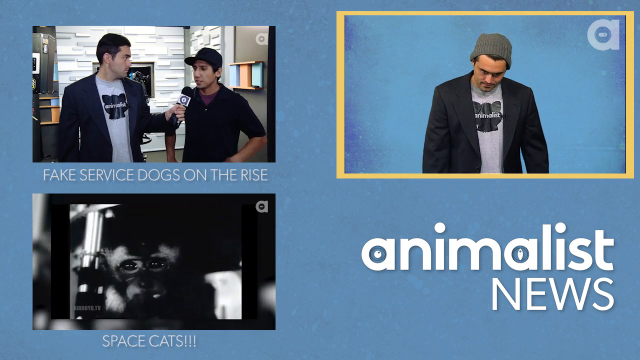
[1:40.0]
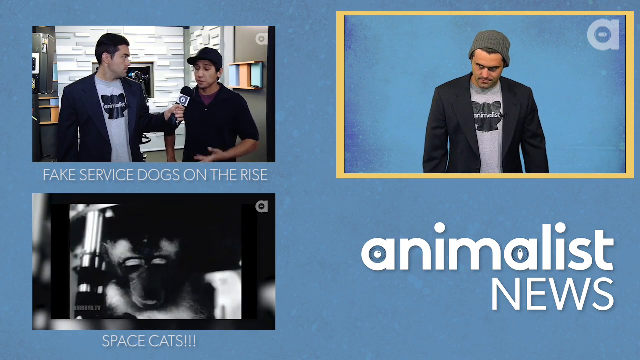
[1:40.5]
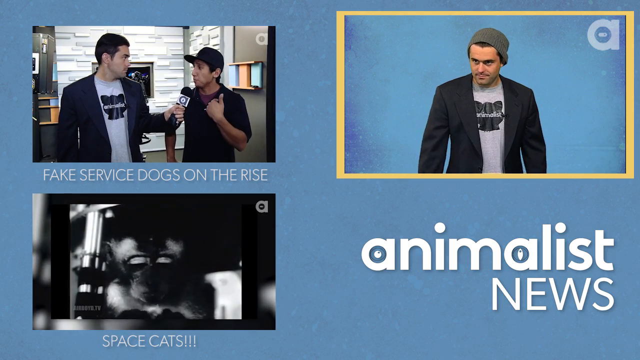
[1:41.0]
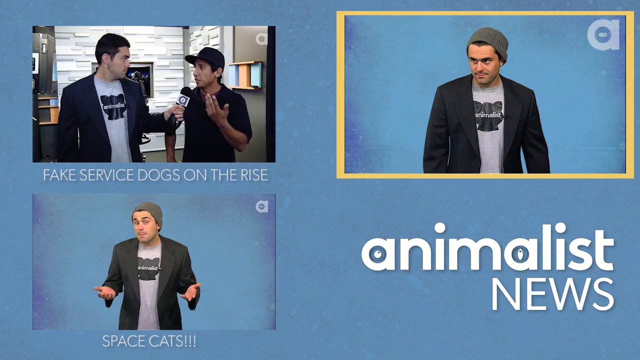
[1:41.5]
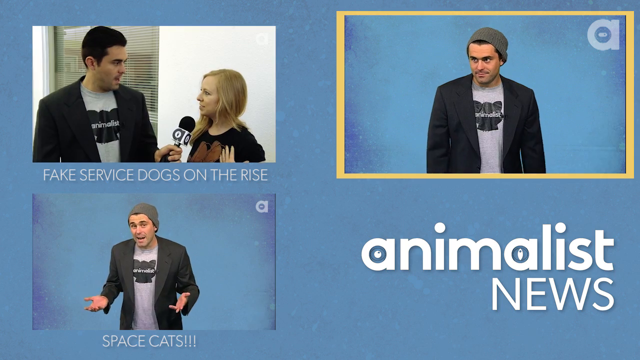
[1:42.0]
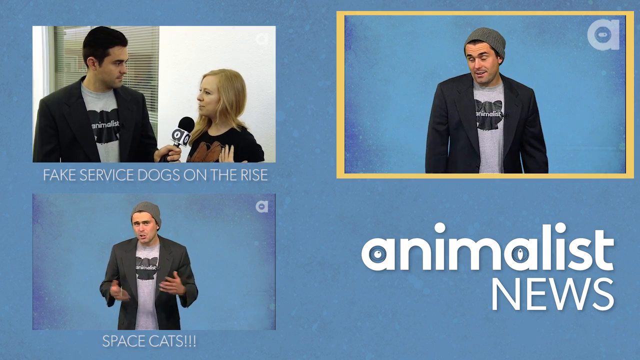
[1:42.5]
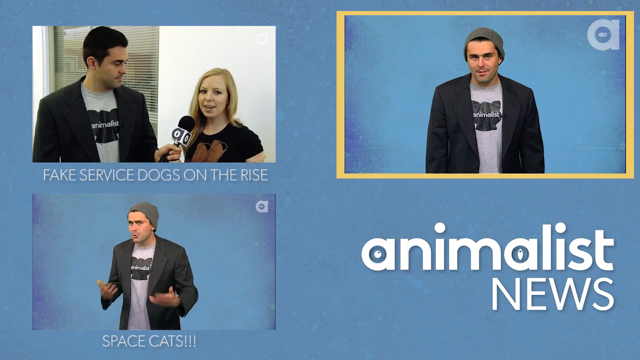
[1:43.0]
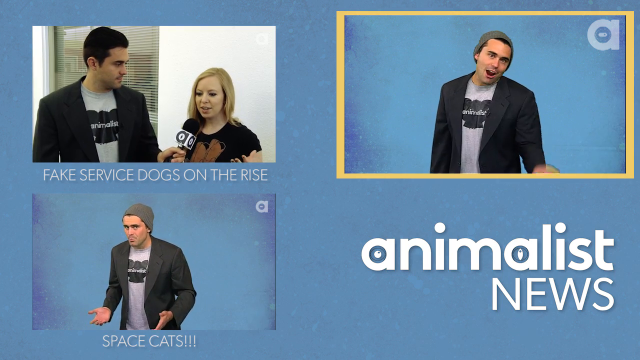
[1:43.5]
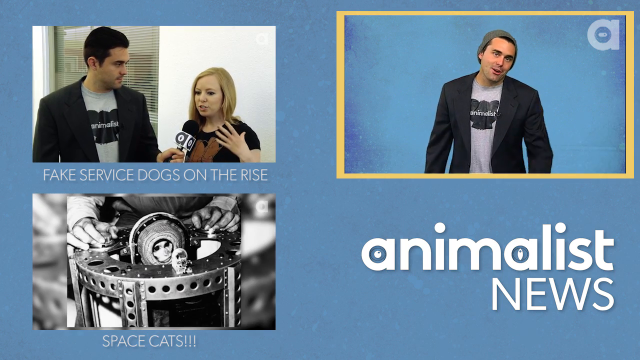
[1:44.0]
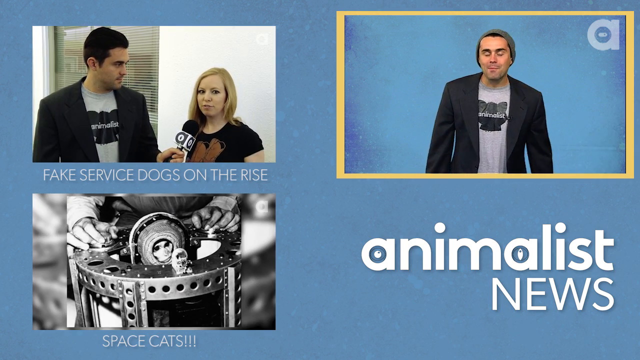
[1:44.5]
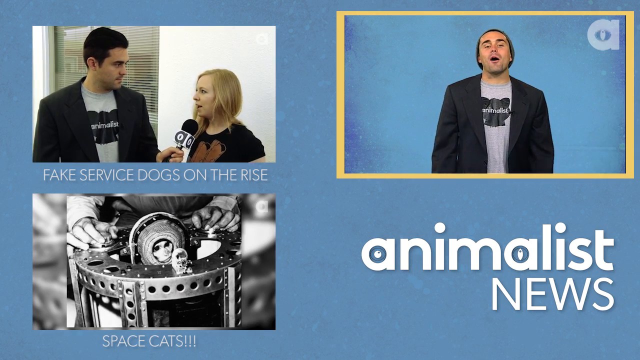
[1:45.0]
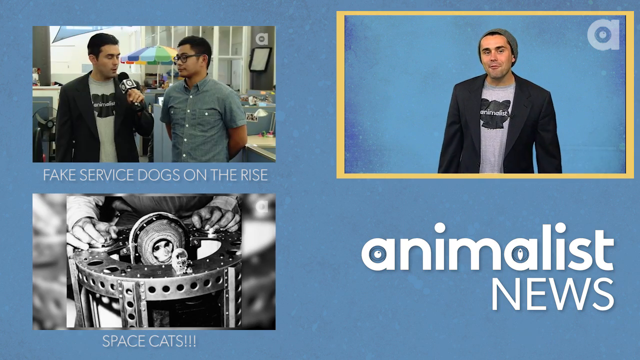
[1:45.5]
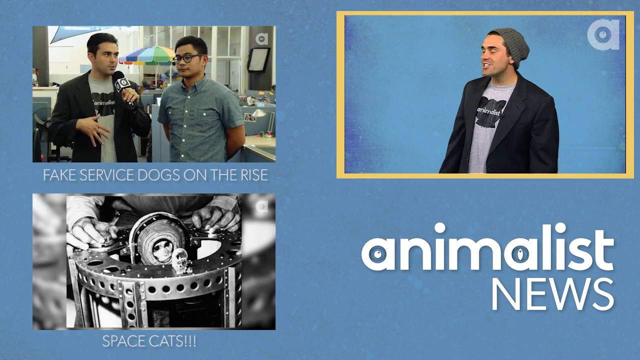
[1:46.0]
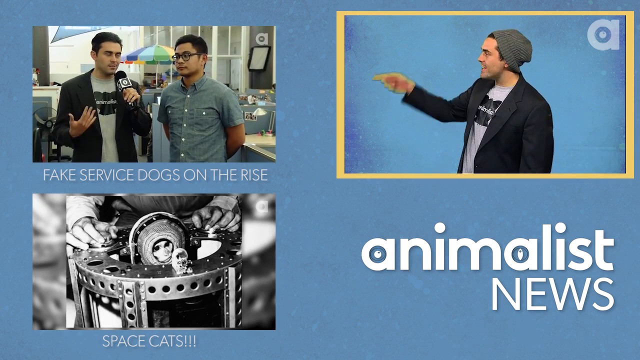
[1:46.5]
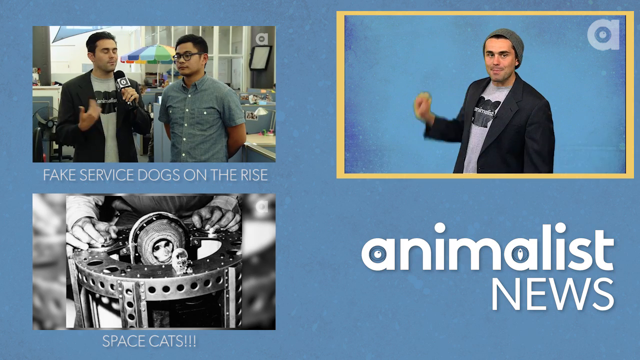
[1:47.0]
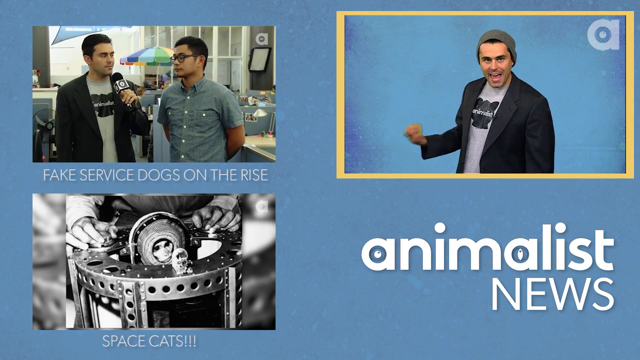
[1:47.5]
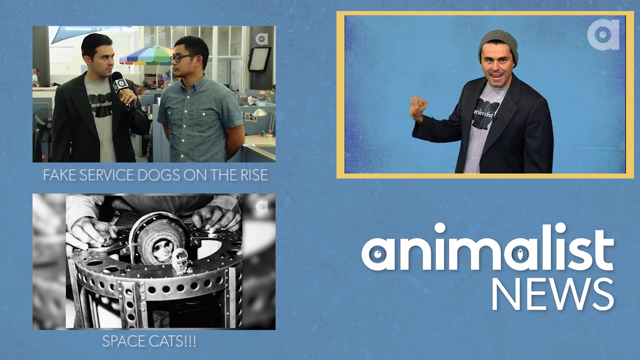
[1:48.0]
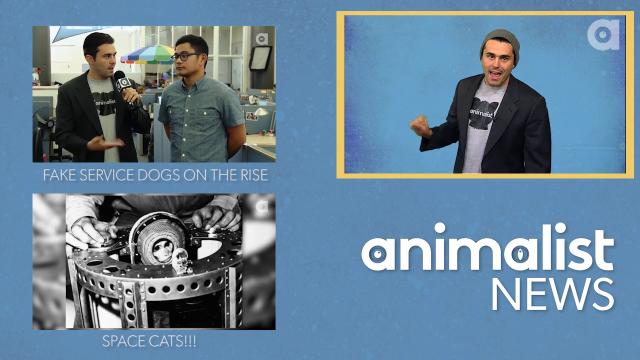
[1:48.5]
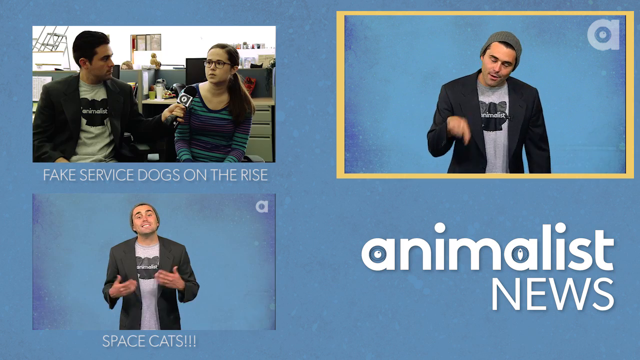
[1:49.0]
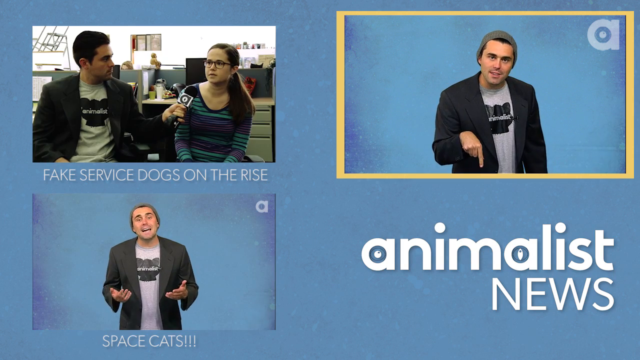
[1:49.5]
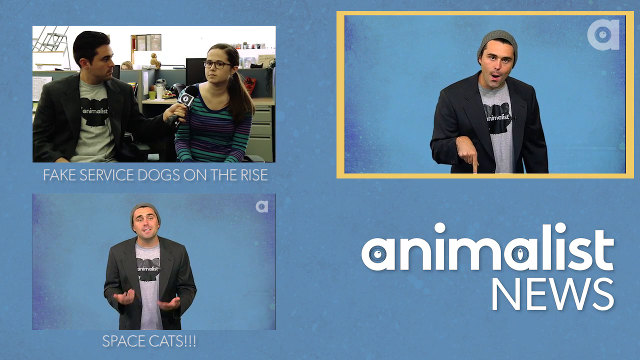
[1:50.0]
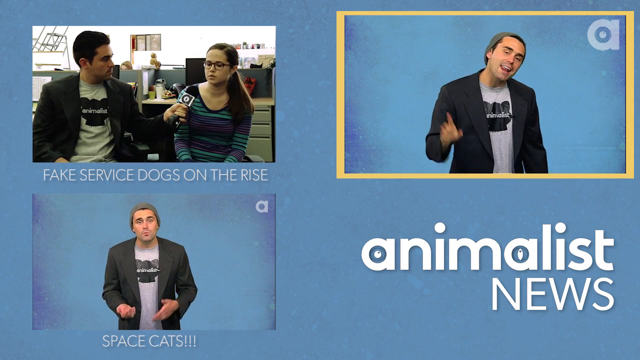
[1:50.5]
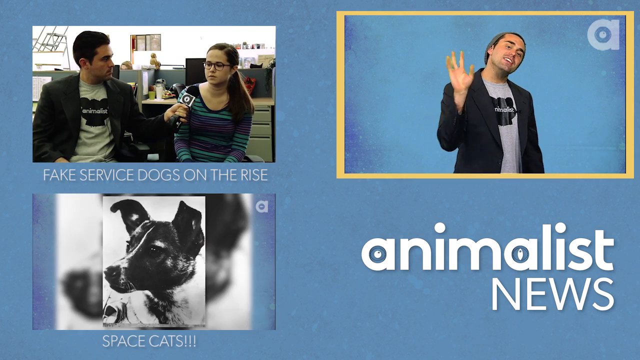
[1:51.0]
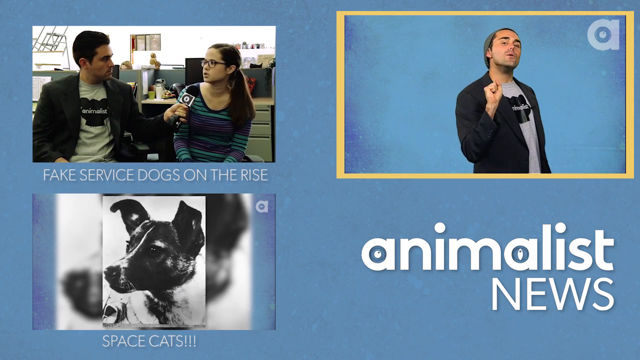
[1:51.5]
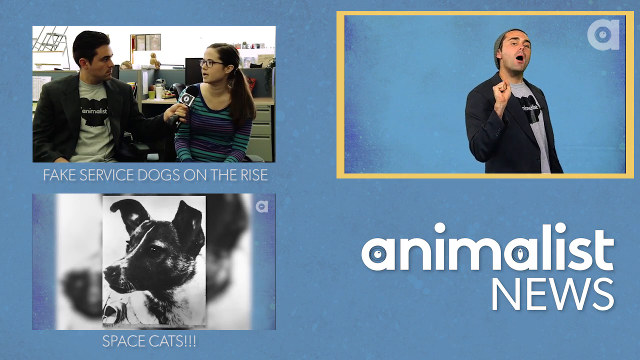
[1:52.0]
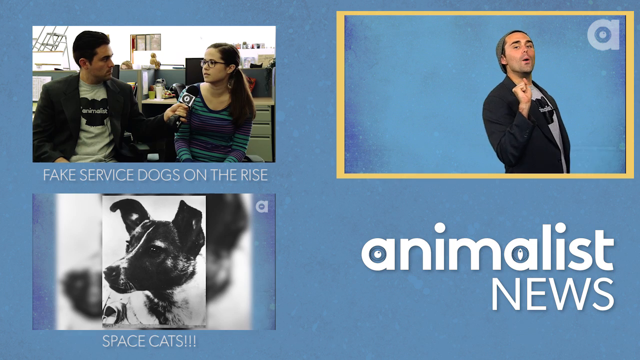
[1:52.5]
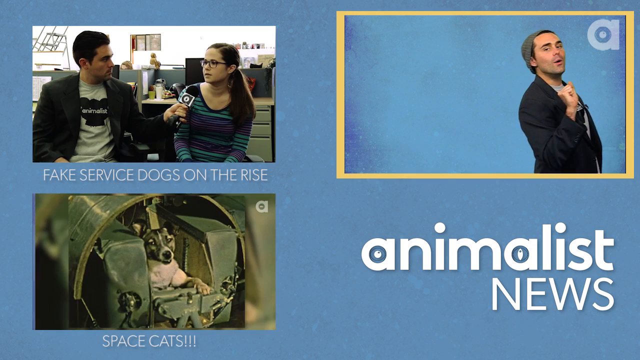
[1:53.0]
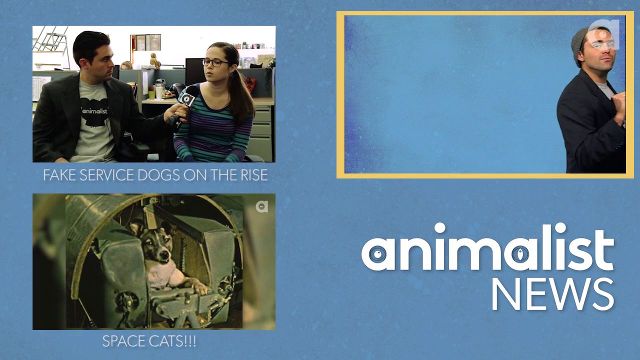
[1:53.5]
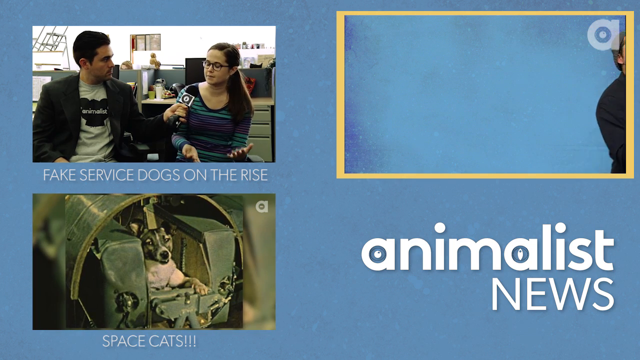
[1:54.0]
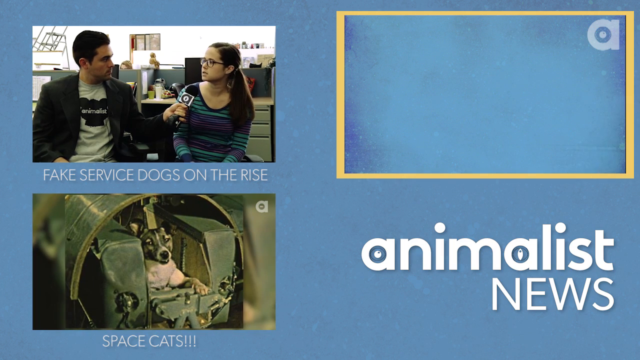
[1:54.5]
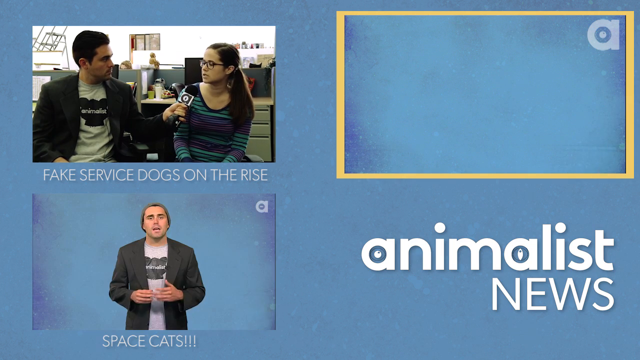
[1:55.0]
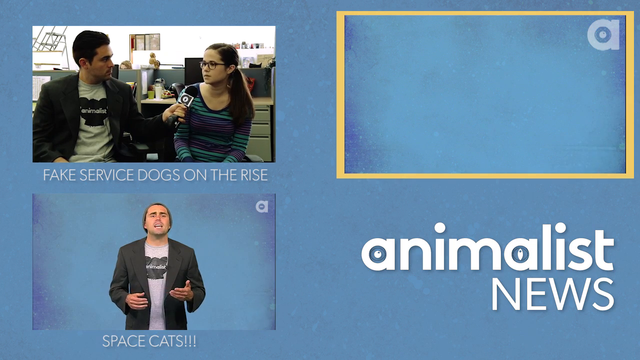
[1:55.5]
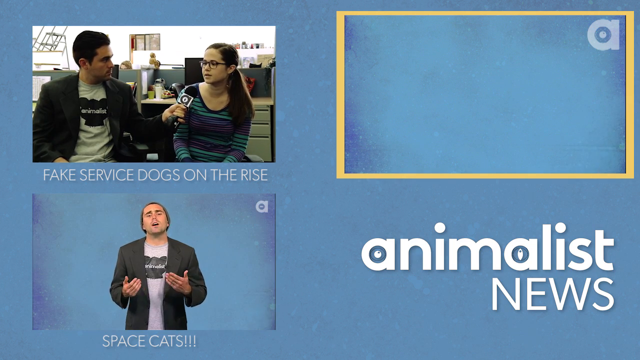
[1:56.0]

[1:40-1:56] The Zoom-like setup of video boxes continues. The host is in the top right, and his box is outlined with yellow highlighted lines. The top left box shows someone interviewing different people in alternating clips. The bottom left box alternates between clips of the host and old scientific clips of monkeys and scientists doing experiments on animals. The bottom right corner shows the Animalist News logo. The host keeps gesturing wildly; at one point he walks off the screen, appears in the bottom left box, and then appears in the top right box again. Text reading "Space Cats" appears in the bottom left box.